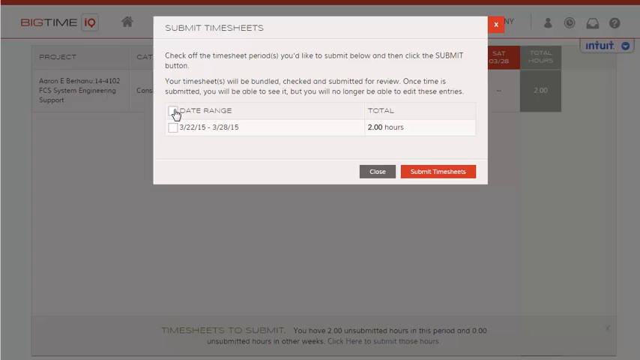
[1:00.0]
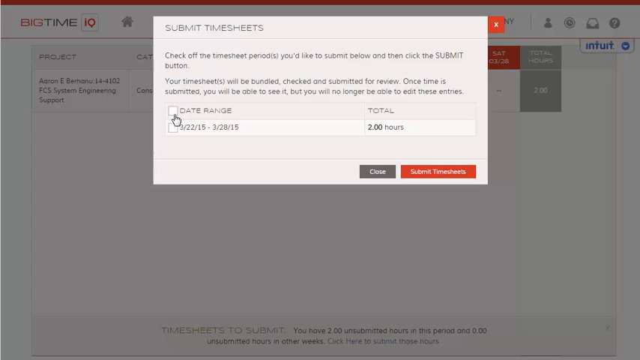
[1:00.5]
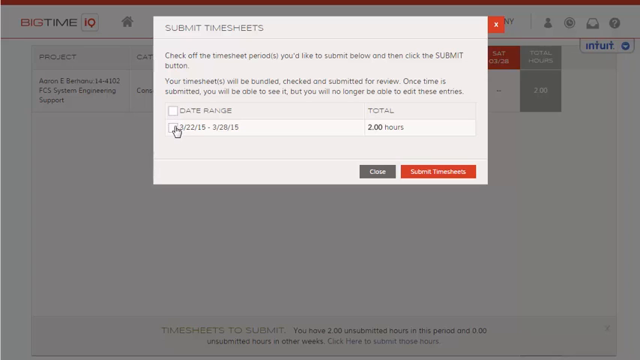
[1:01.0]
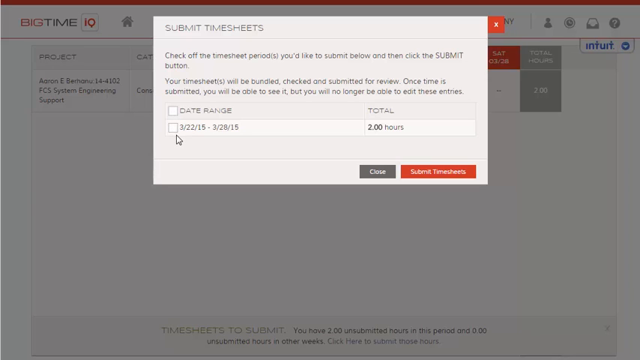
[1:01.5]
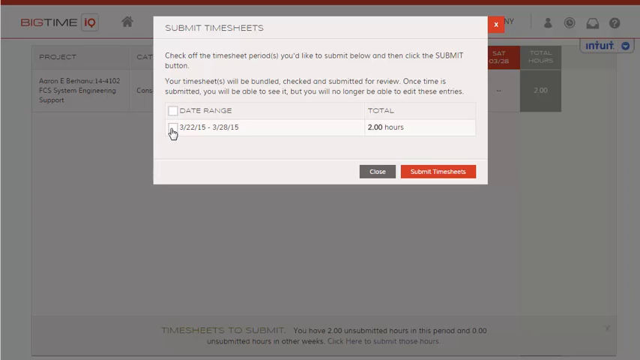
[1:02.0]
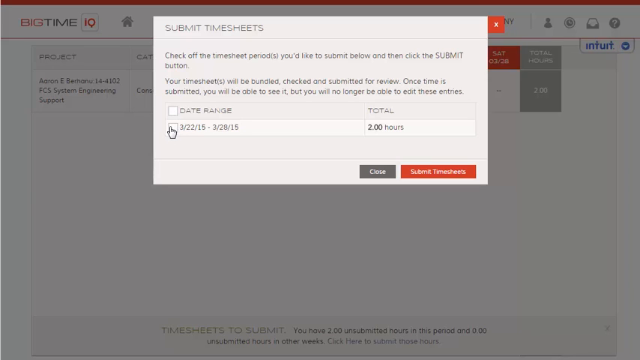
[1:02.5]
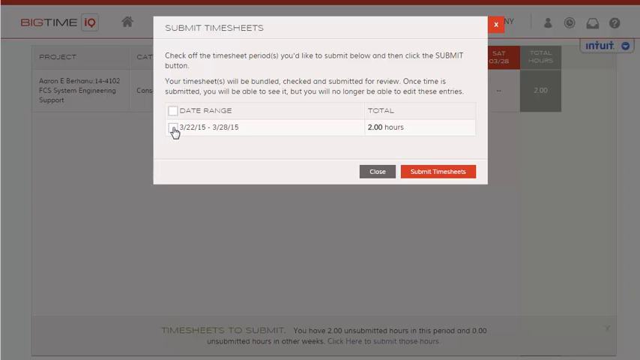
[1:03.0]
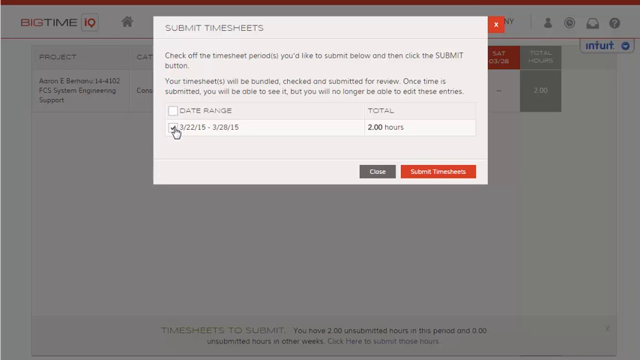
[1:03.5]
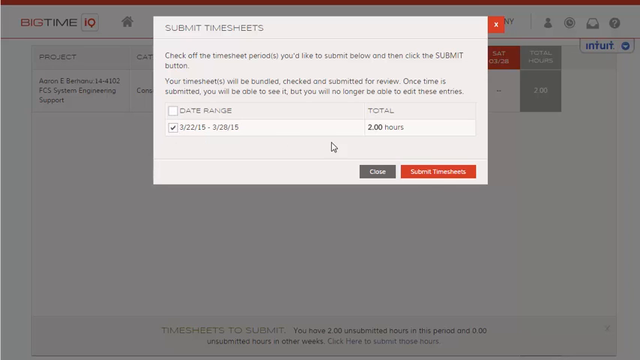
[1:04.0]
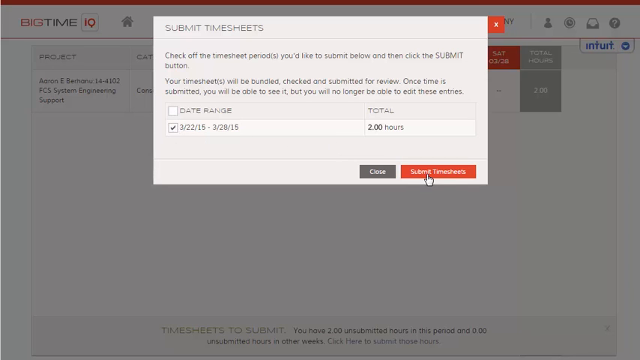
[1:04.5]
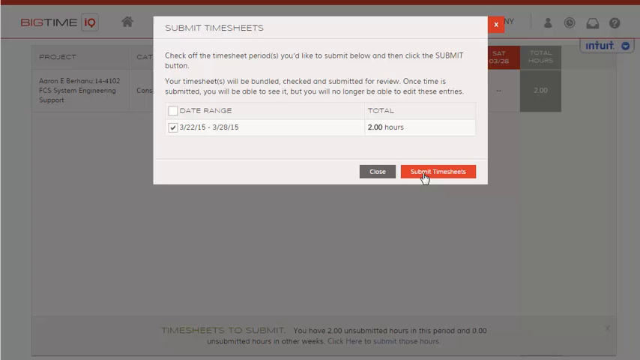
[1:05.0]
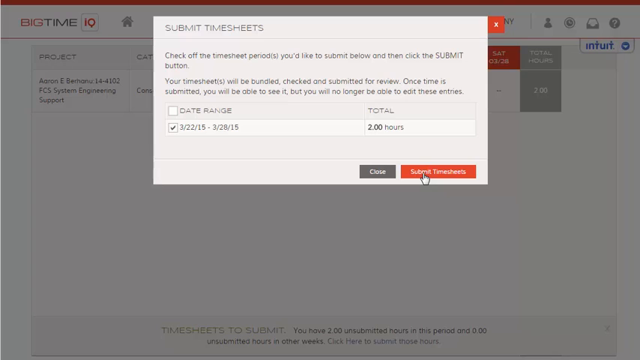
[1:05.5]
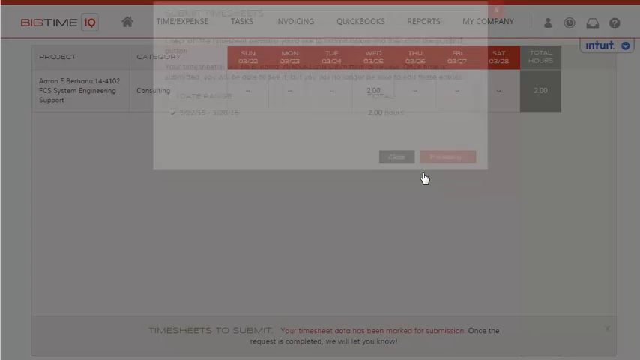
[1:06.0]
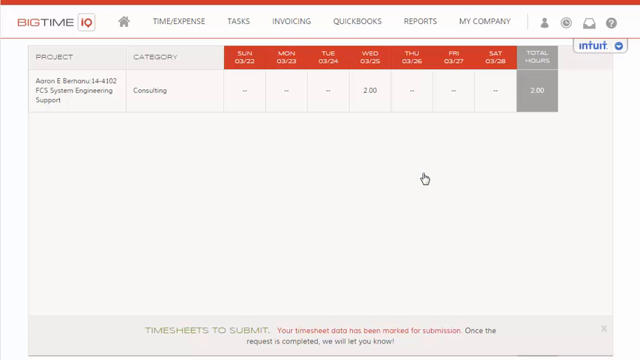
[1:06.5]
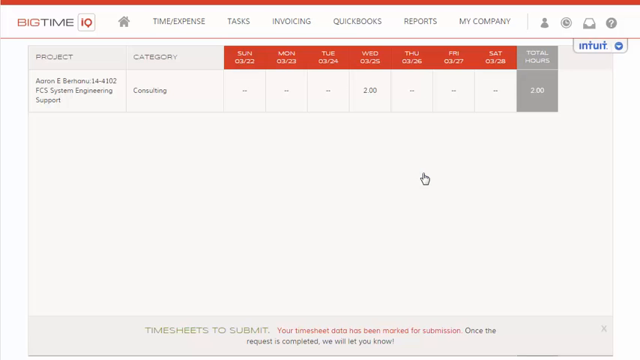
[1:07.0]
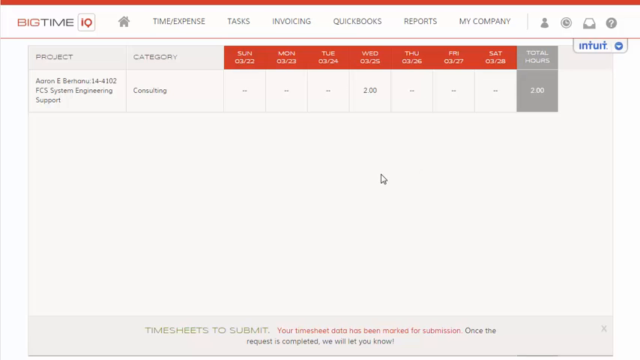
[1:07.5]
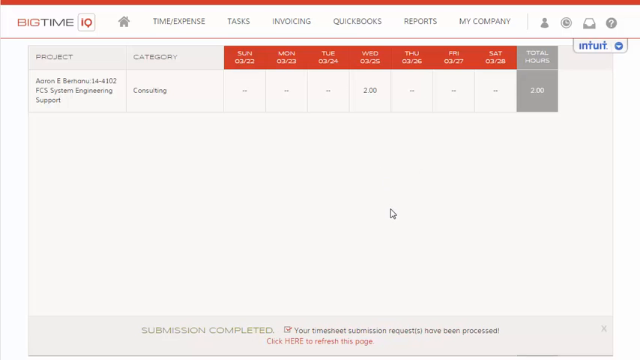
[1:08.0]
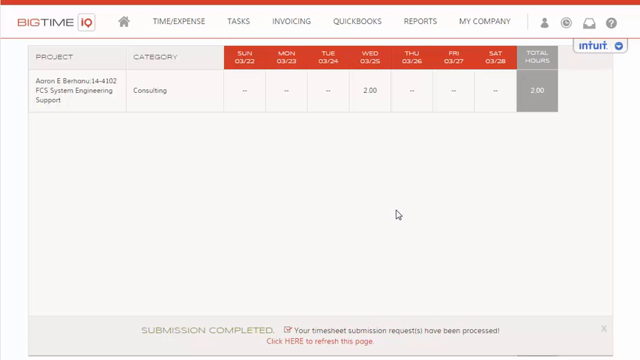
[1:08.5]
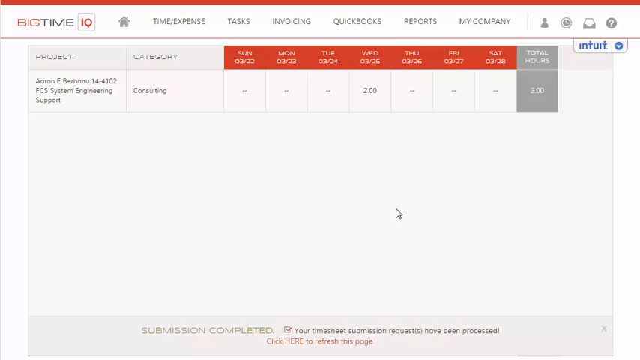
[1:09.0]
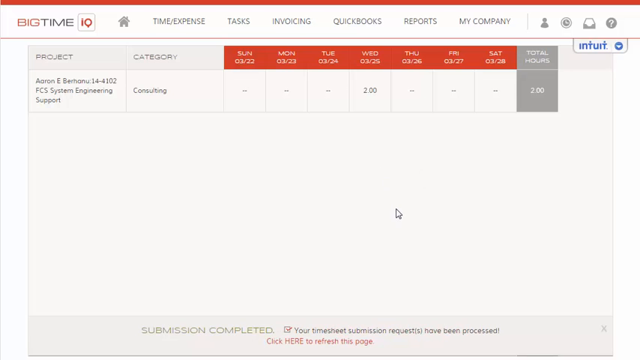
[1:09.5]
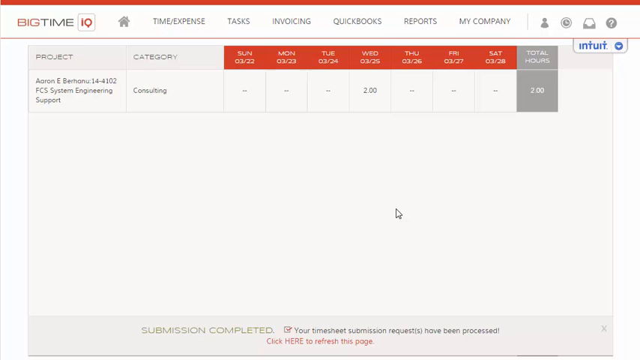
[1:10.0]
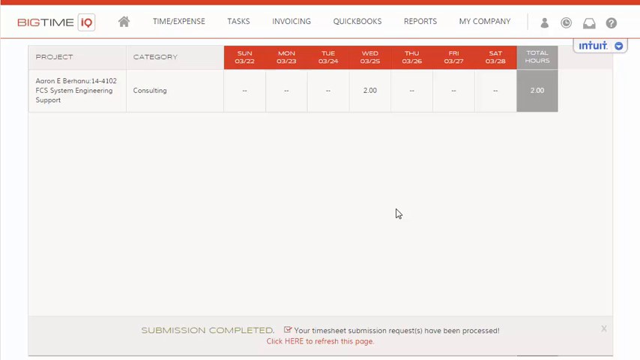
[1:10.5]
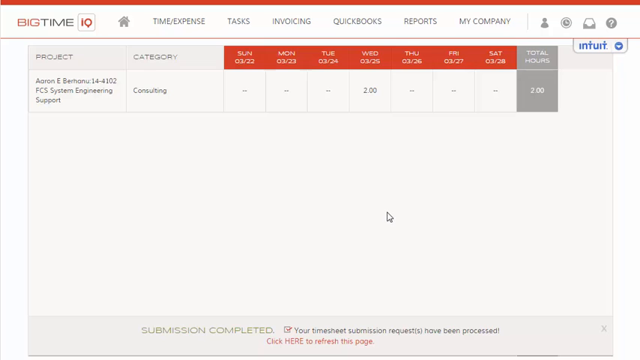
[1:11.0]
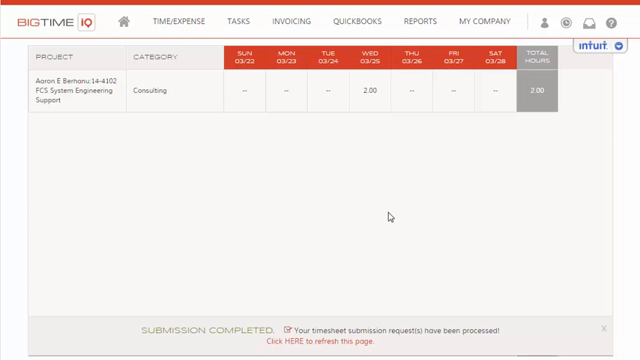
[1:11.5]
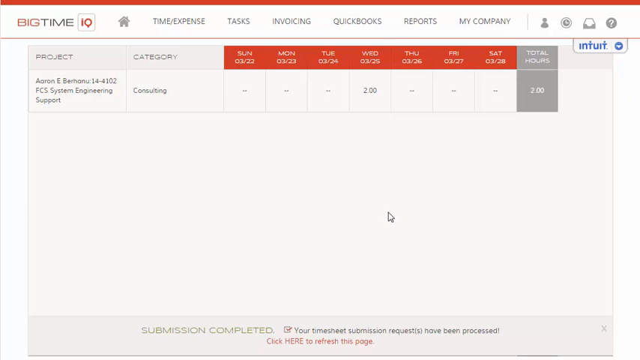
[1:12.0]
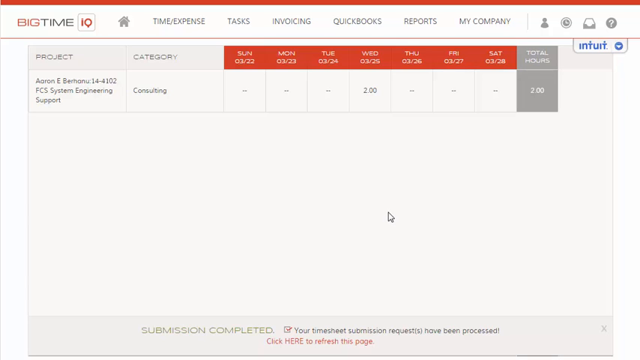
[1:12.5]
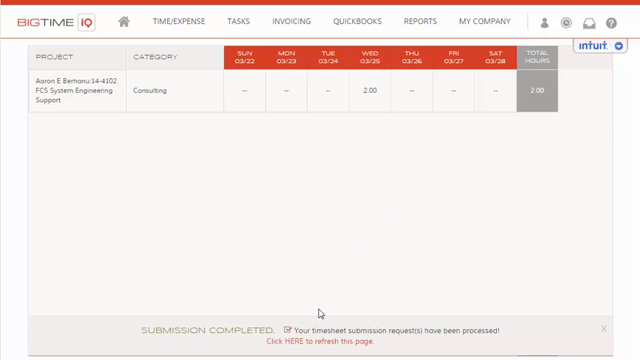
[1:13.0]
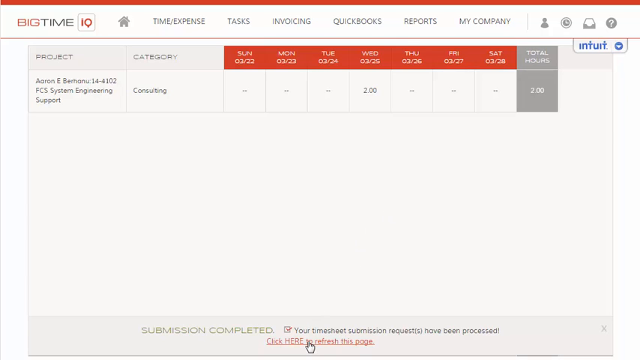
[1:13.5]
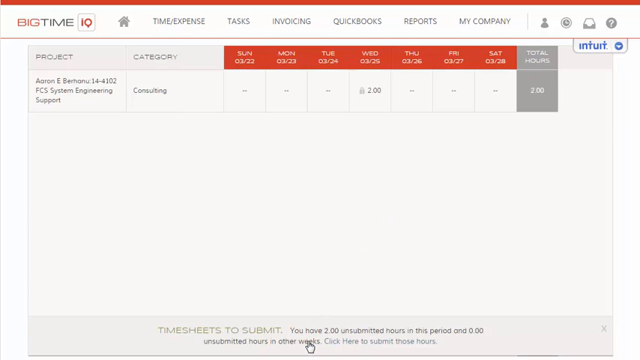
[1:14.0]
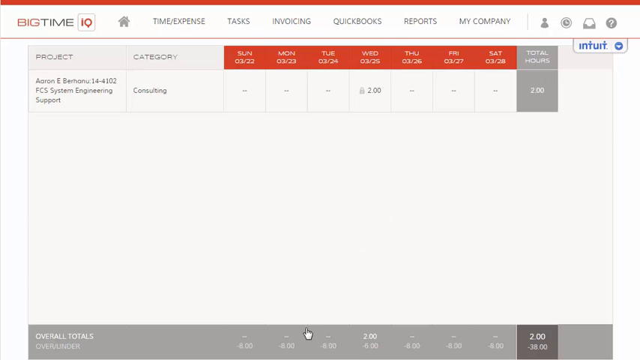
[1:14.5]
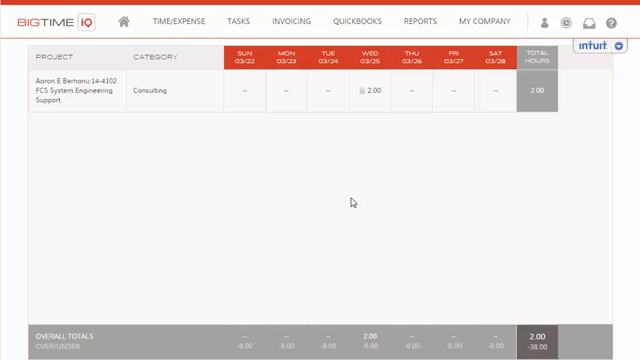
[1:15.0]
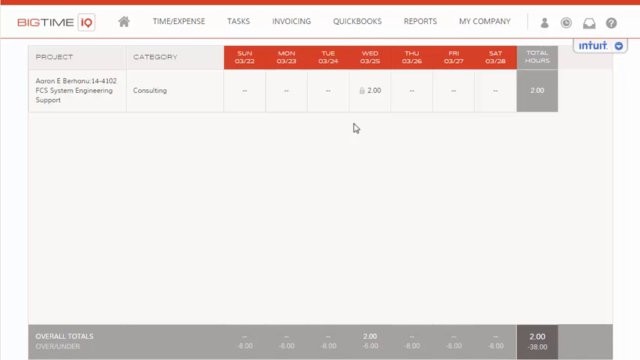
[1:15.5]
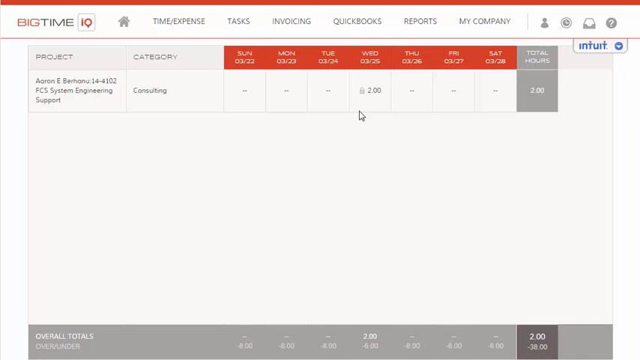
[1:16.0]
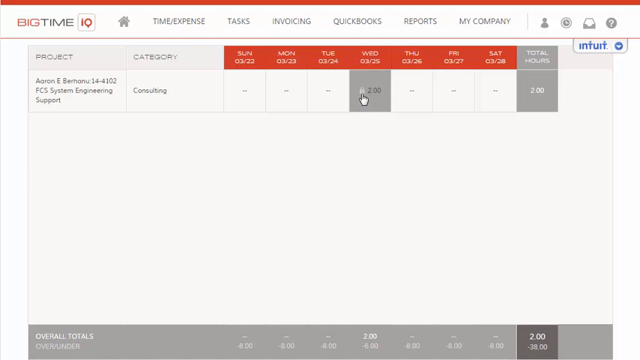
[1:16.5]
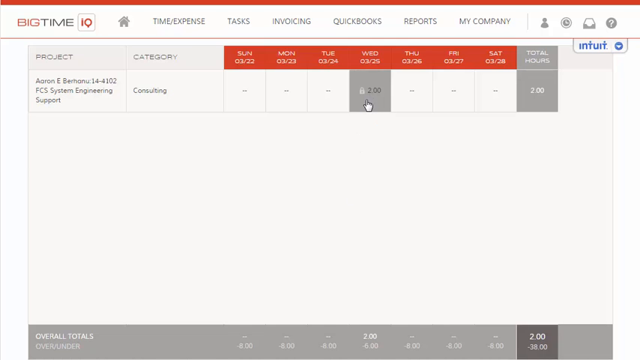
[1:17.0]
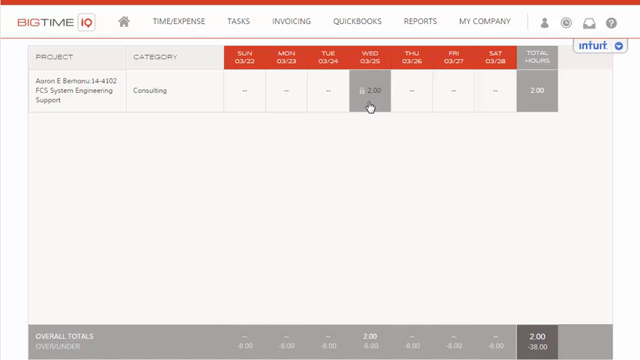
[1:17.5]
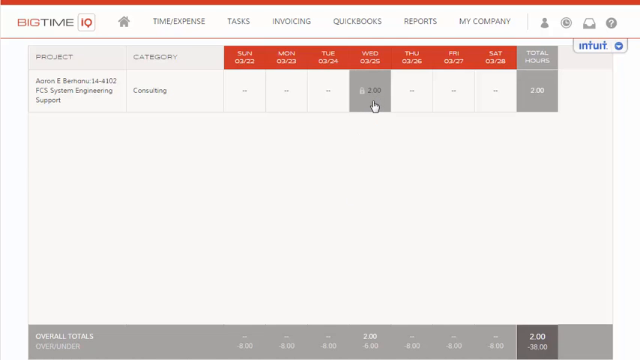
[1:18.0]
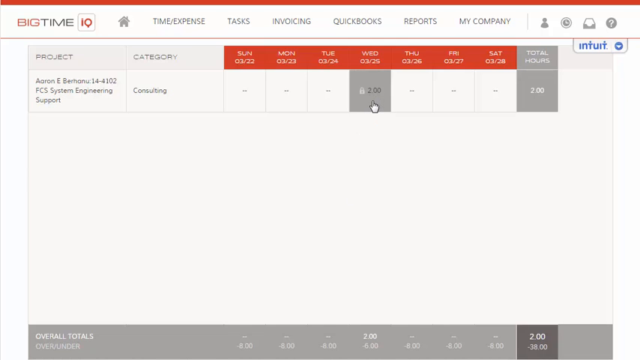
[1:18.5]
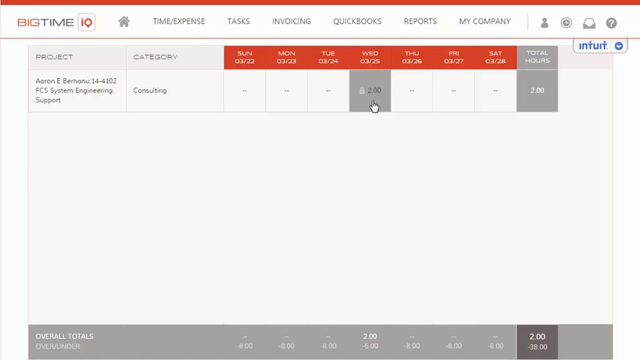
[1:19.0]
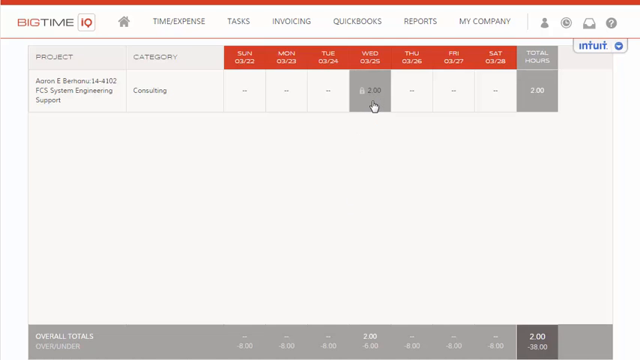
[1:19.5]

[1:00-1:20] The "submit timesheets" pop-up is still up, reading "check off the timesheet period you would like to submit below and then click the submit button. Your timesheets will be bundled, checked and submitted for review. Once time is submitted, you will be able to see it, but you will no longer be able to edit these entries." The date range 3-22-15 to 3-28-15, for two hours, is unchecked, and there are options to close or submit. The user checks the 3-22 to 3-28-15 box and hits the red submit button. They then sort of remain on the timesheet screen with the mouse idle. Next they hover over the two hours they entered, and a small lock icon appears next to it, indicating that the entry can no longer be changed.